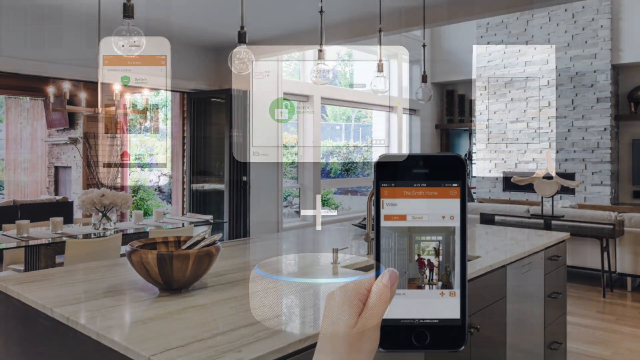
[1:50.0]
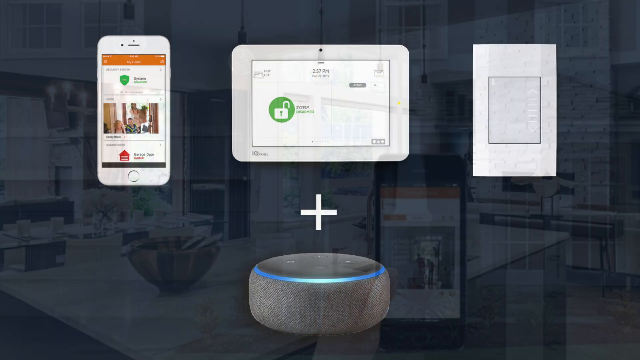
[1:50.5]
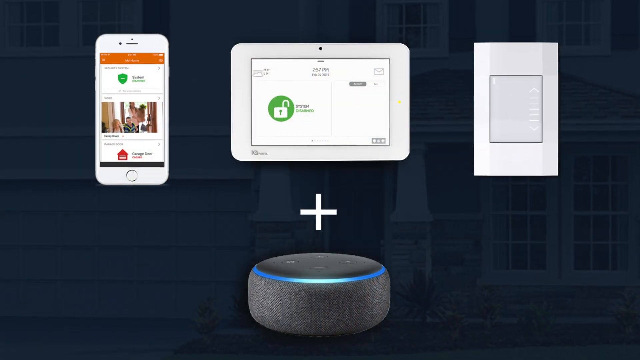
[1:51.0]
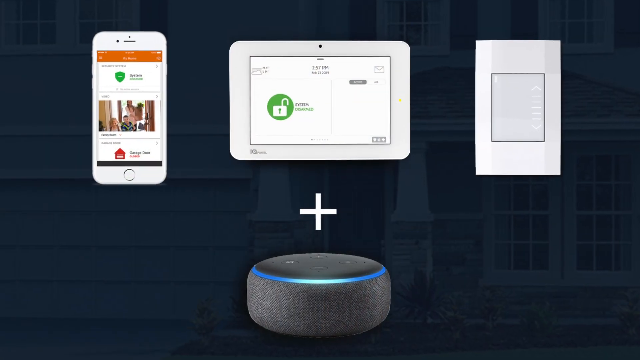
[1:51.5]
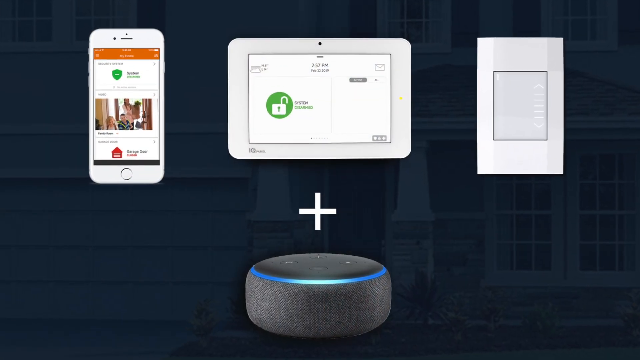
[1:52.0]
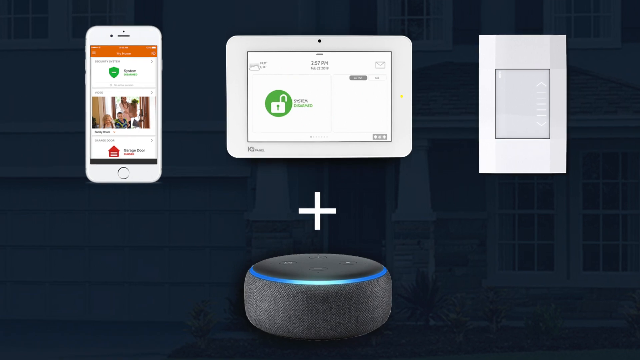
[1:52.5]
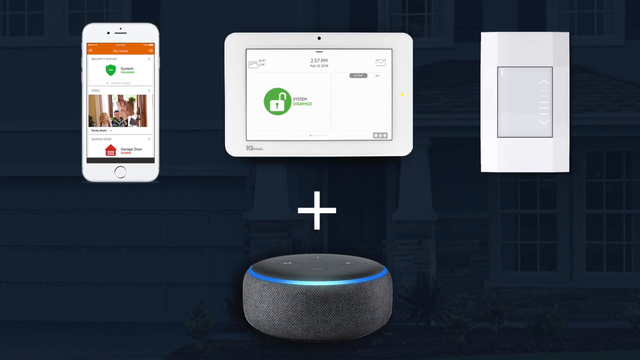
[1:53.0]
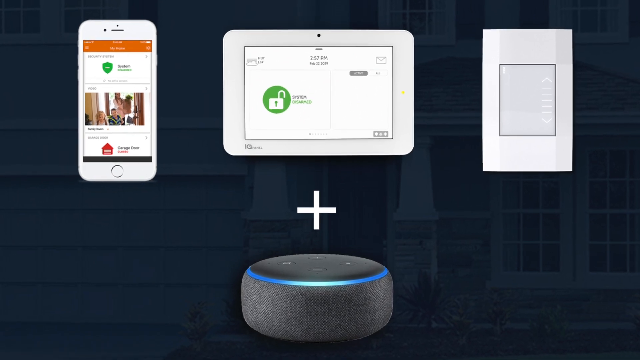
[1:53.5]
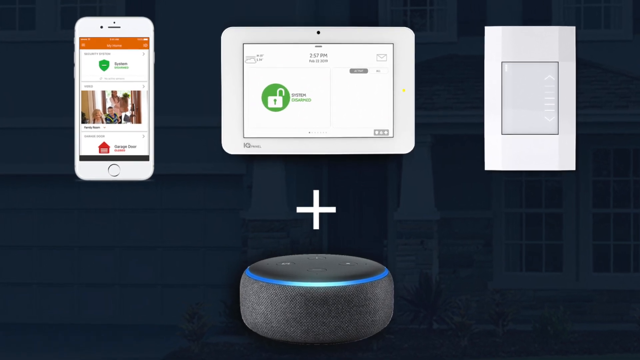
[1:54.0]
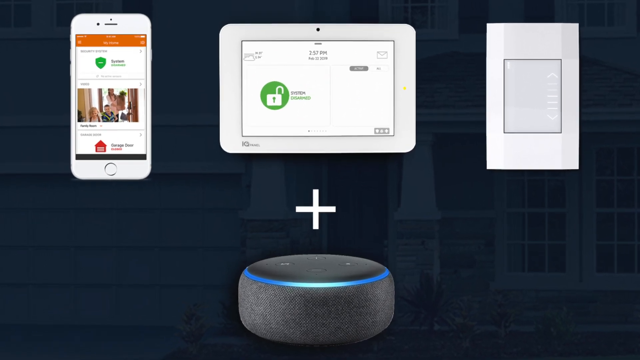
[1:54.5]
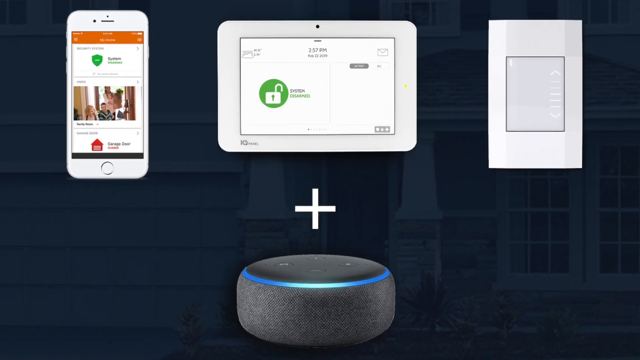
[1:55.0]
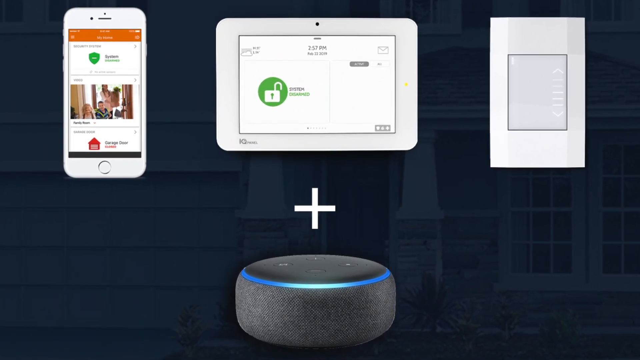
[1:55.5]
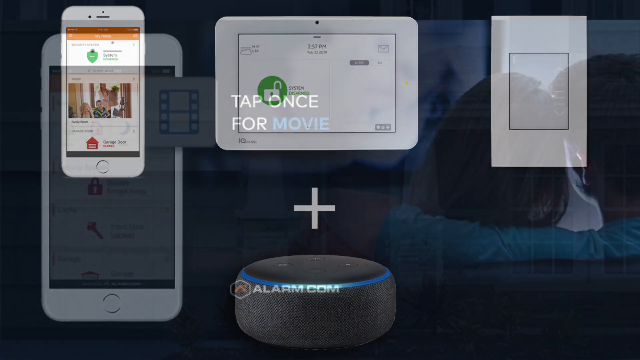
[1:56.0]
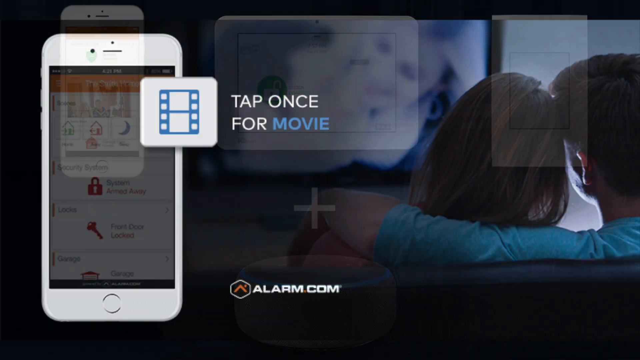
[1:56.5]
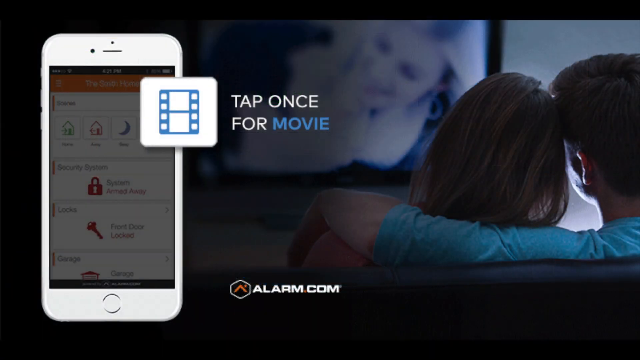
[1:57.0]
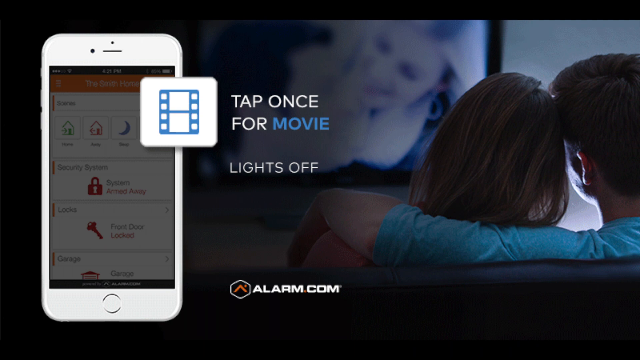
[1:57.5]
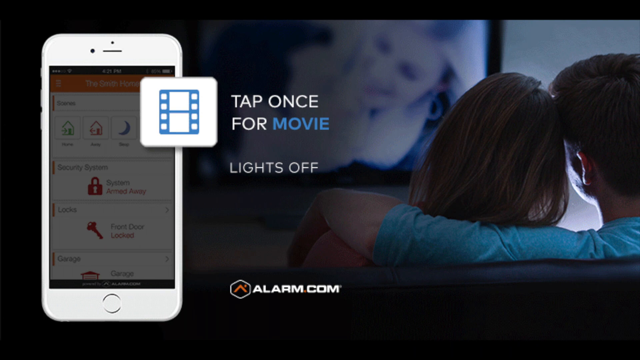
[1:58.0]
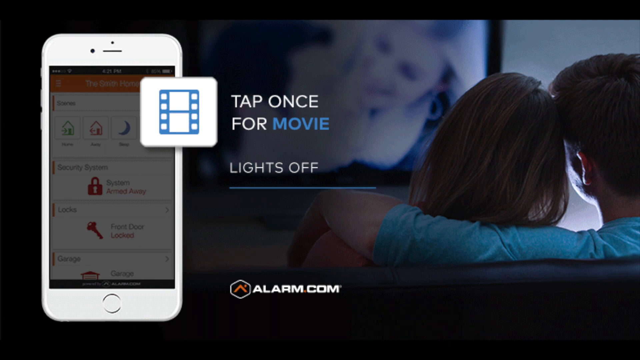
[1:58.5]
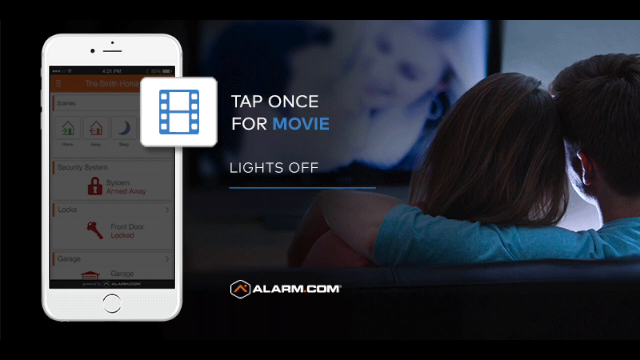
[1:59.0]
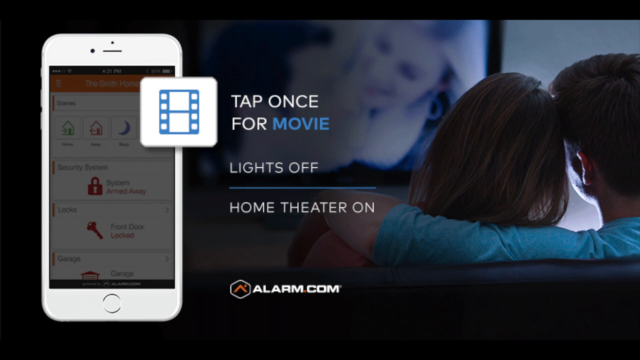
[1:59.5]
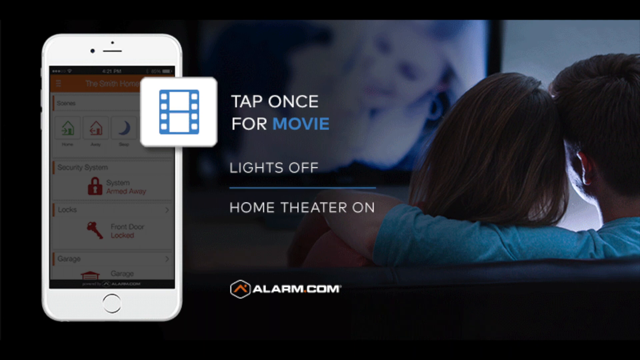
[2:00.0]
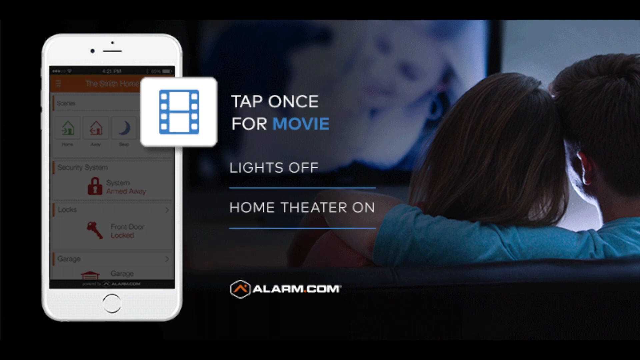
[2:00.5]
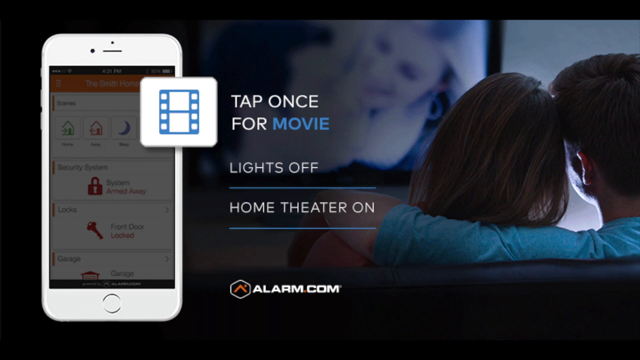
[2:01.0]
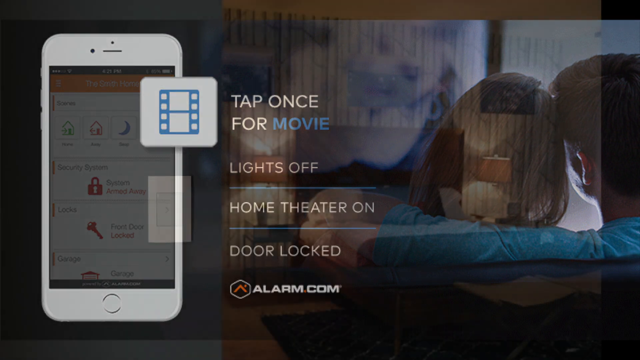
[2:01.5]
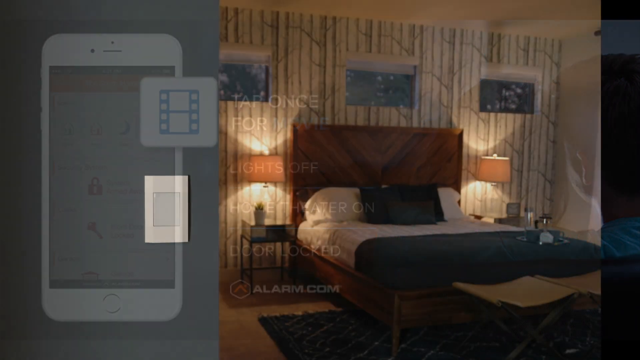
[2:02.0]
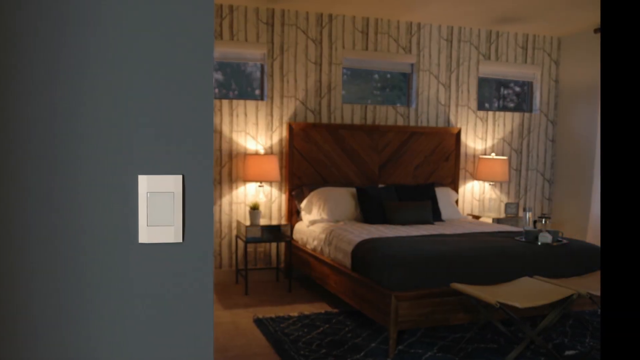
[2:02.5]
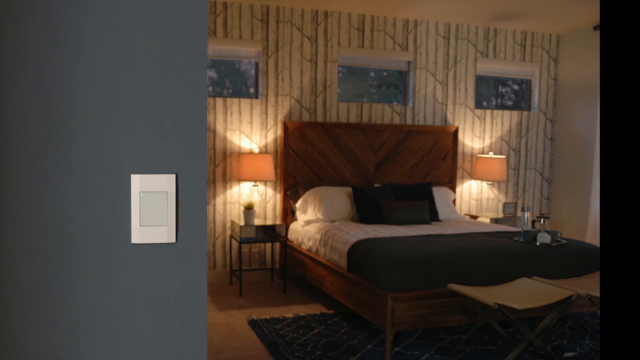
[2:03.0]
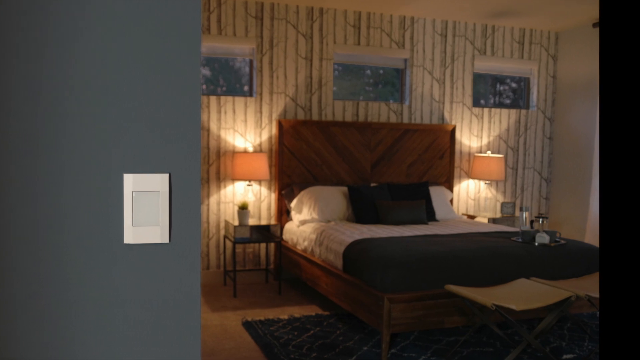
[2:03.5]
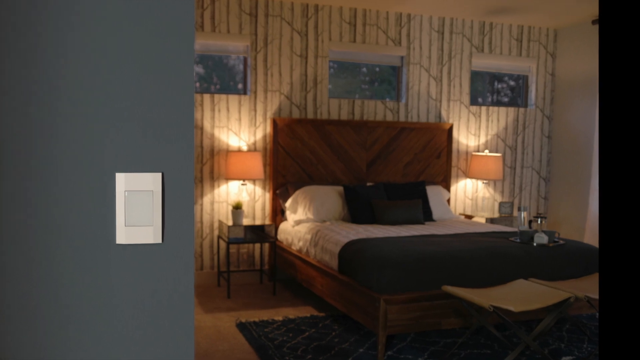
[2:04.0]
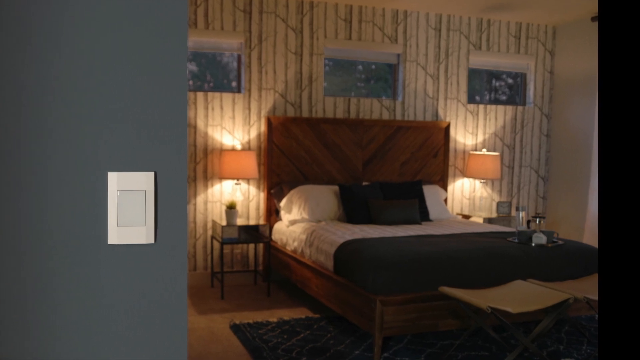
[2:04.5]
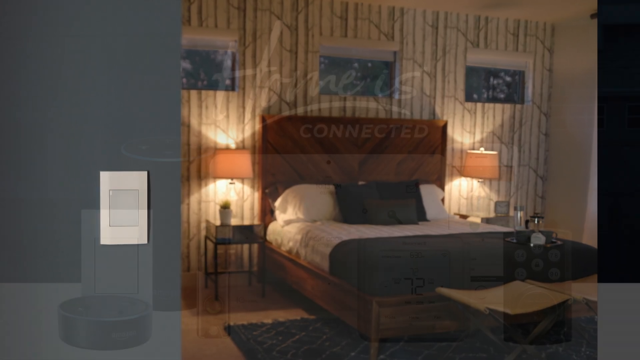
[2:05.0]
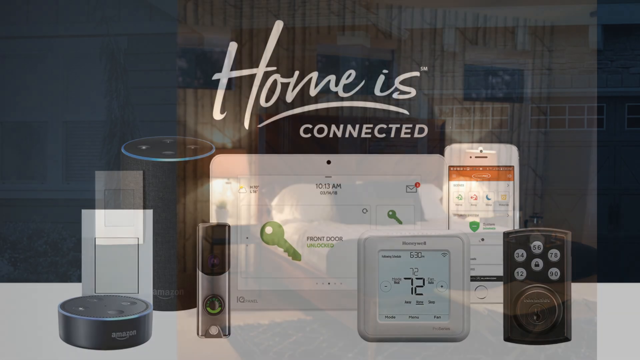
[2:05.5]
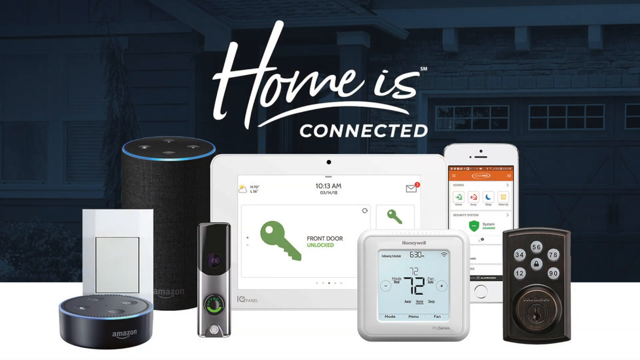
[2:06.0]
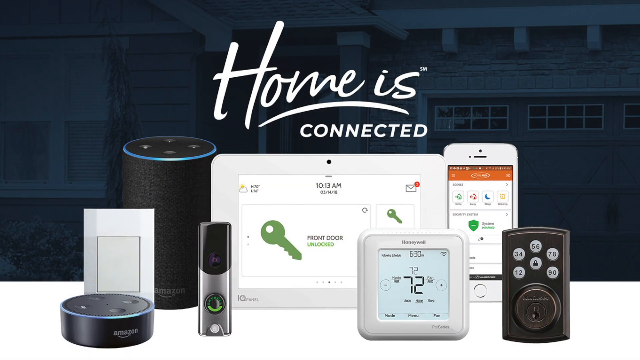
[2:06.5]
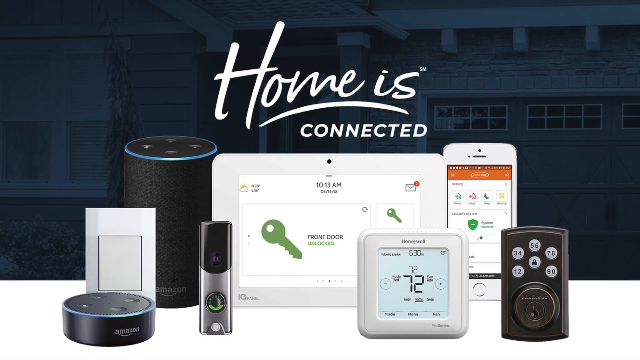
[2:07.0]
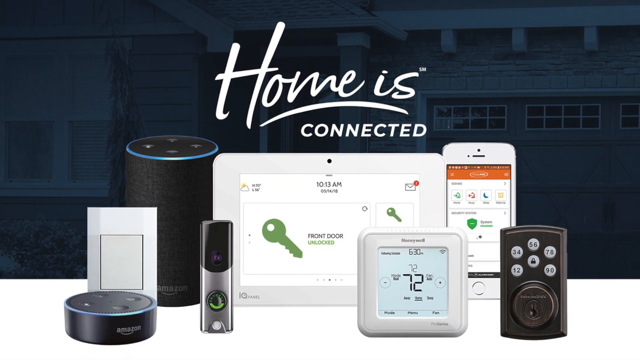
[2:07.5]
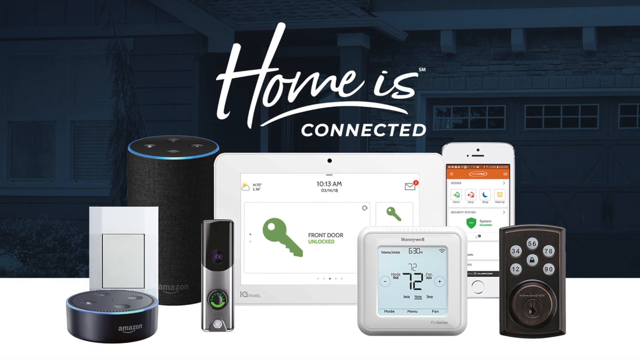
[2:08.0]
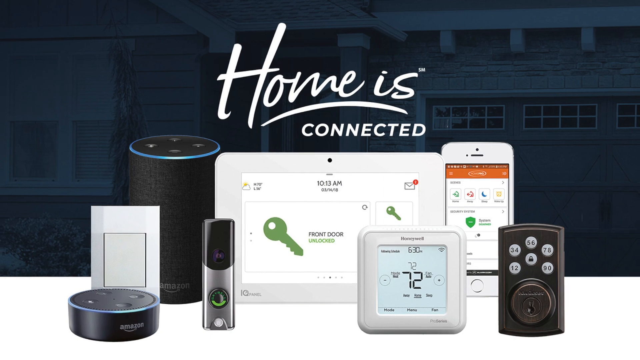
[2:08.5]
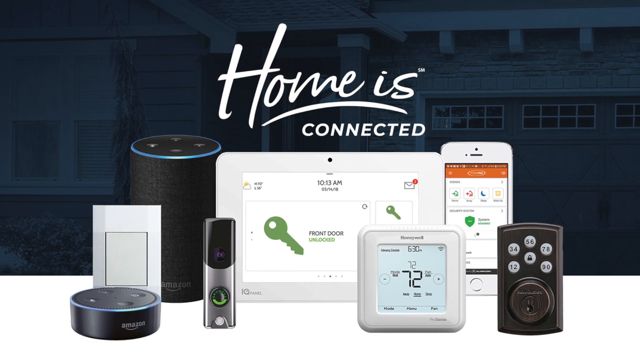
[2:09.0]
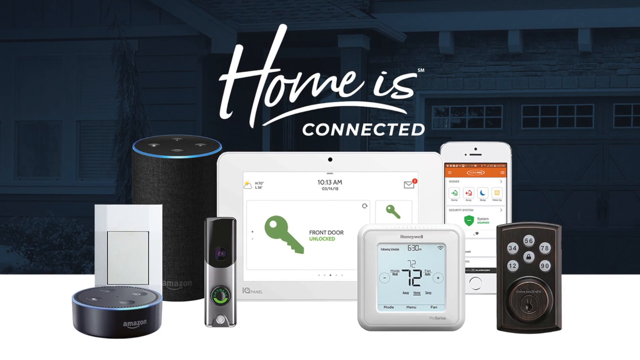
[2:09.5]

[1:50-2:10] The video is slightly wider than it is tall. The background has a blue tint and is very dim; in the lower right is a double white door, like the front of a house, with some second-story windows above it. In the foreground, three devices run across the top from left to right: a phone, a tablet, and what looks like a wall control panel, with a management interface shown on the first two. Below the tablet is a plus sign and what appears to be an Alexa. The view slowly zooms in on these and fades to another screen with just a phone on the left and, on the right, the words "tap once for movie". In the background, the backs of the heads of a couple sitting on a couch are visible, facing a TV. In the center, the words "lights off" appear above the previous words, then "home theater on" comes in below, and below that "door locked" as the final one.